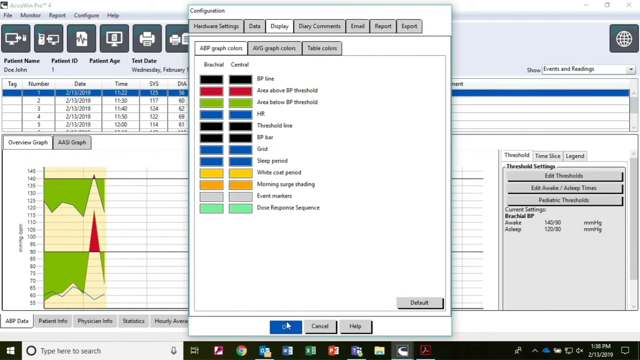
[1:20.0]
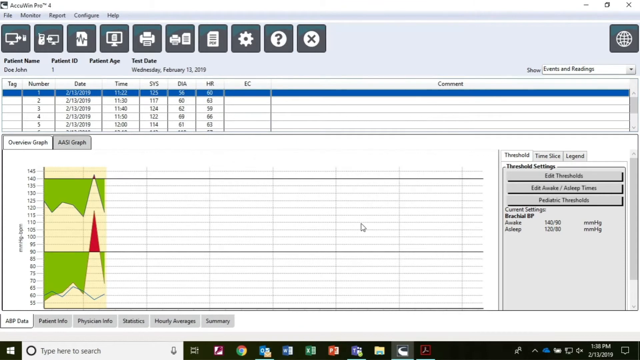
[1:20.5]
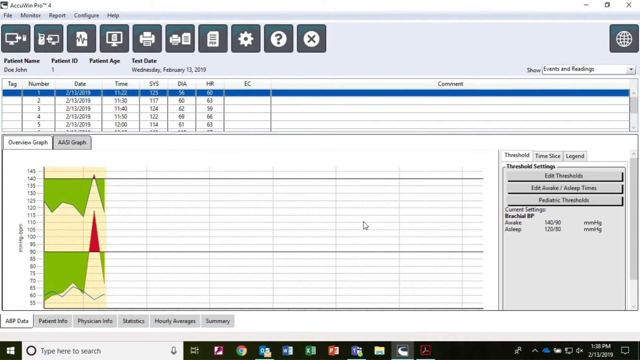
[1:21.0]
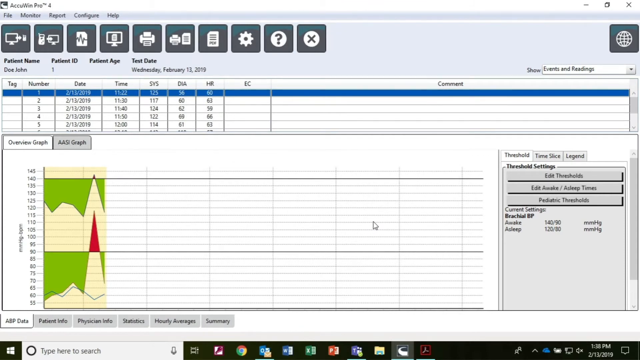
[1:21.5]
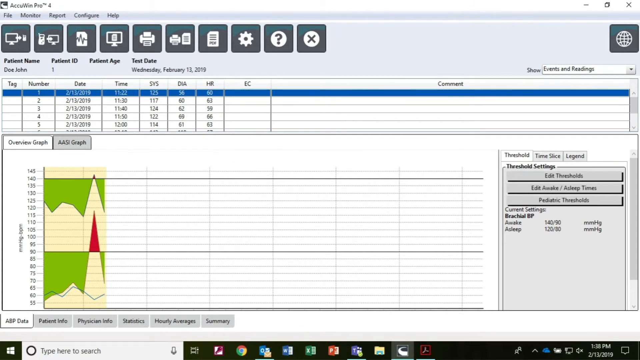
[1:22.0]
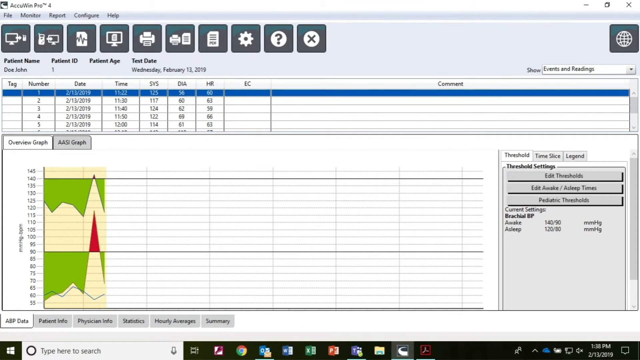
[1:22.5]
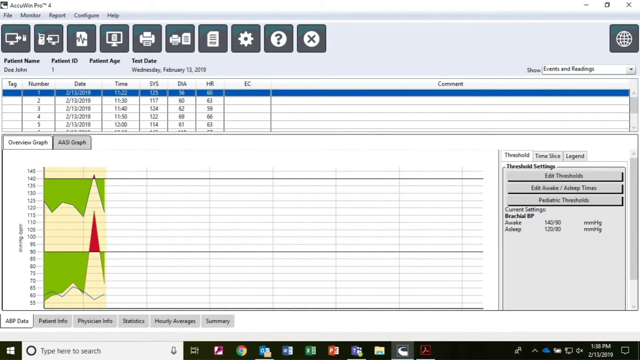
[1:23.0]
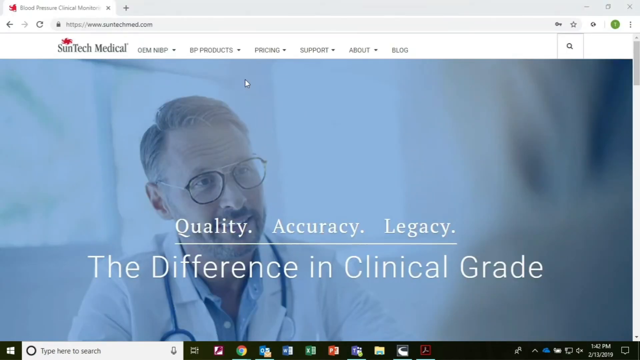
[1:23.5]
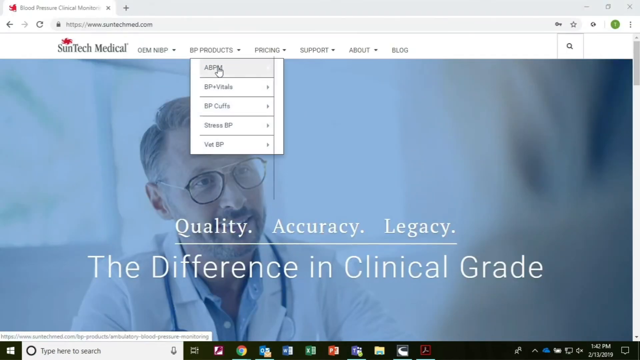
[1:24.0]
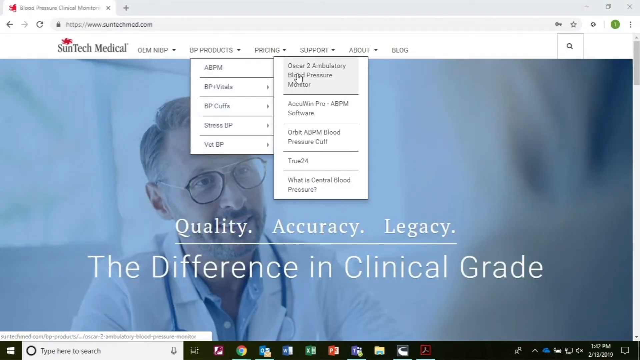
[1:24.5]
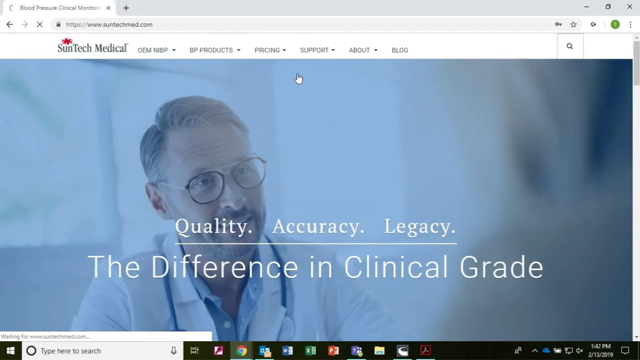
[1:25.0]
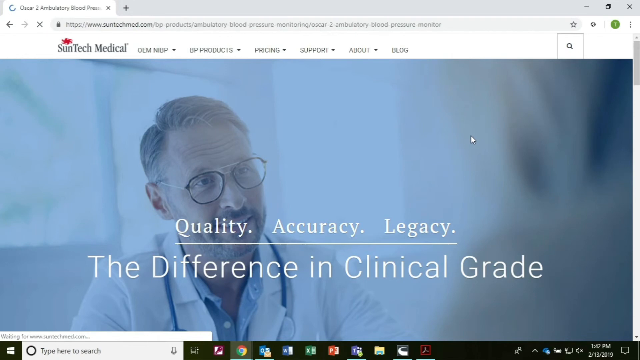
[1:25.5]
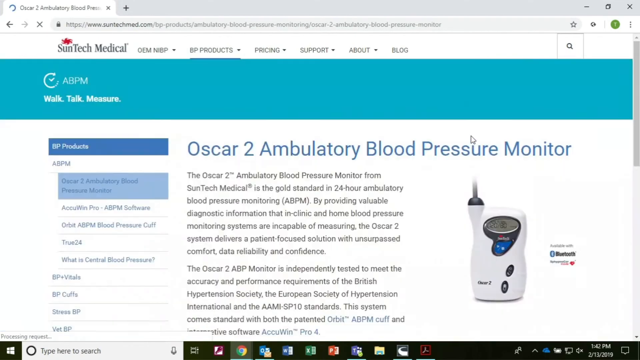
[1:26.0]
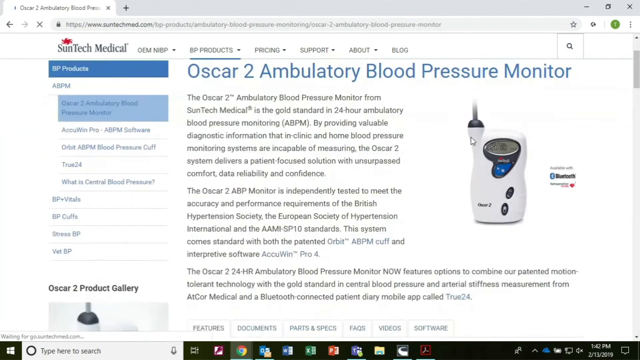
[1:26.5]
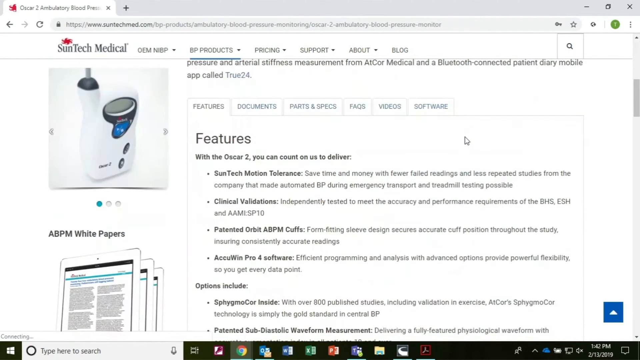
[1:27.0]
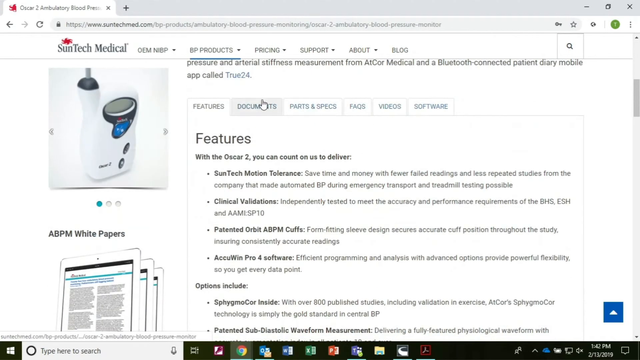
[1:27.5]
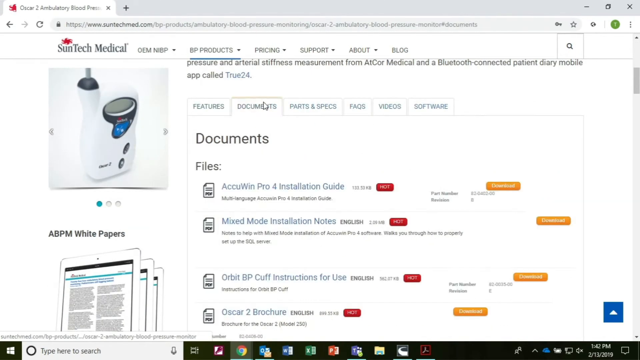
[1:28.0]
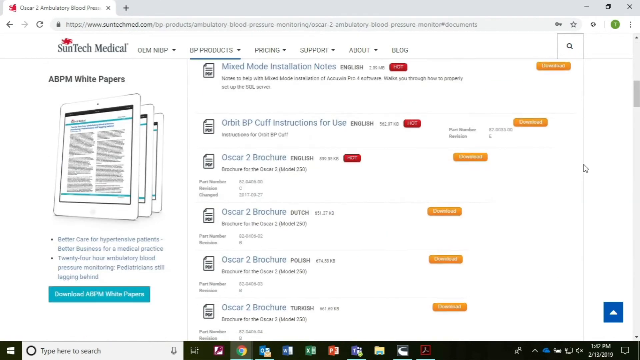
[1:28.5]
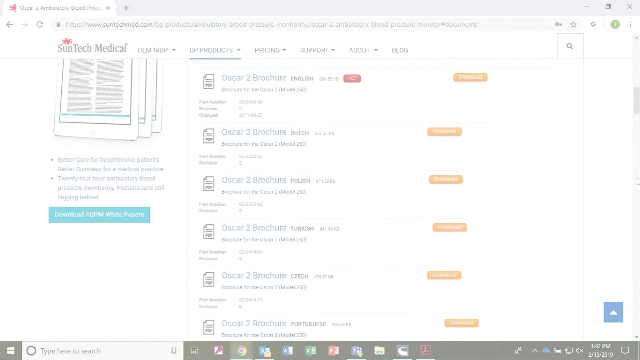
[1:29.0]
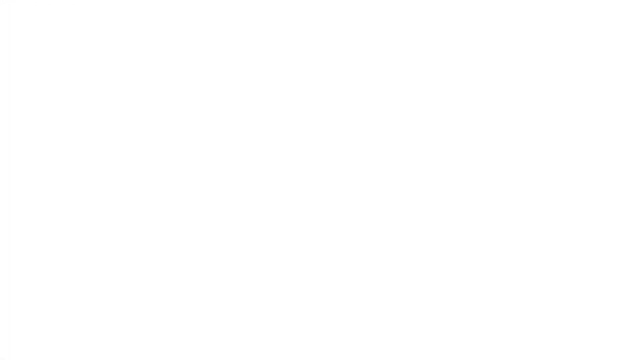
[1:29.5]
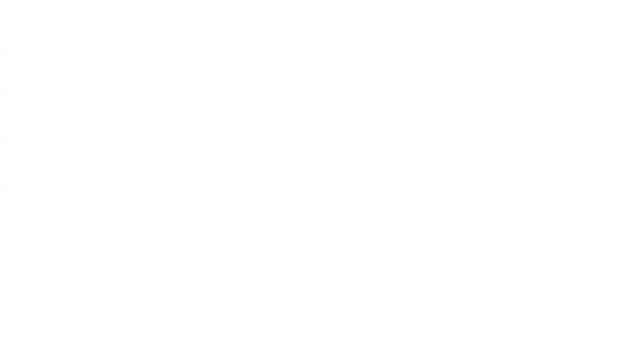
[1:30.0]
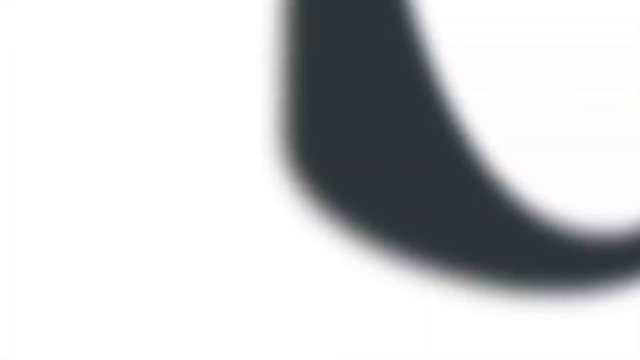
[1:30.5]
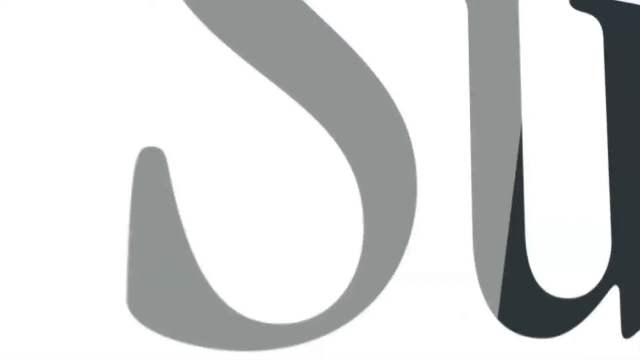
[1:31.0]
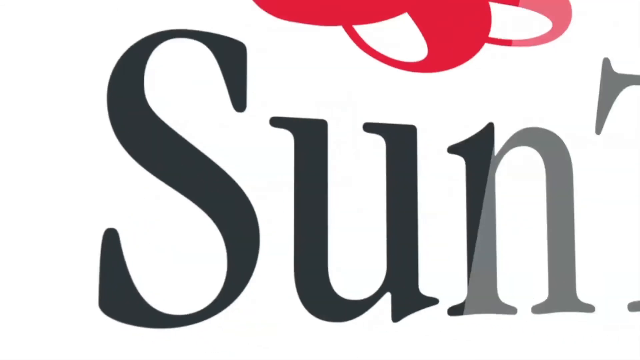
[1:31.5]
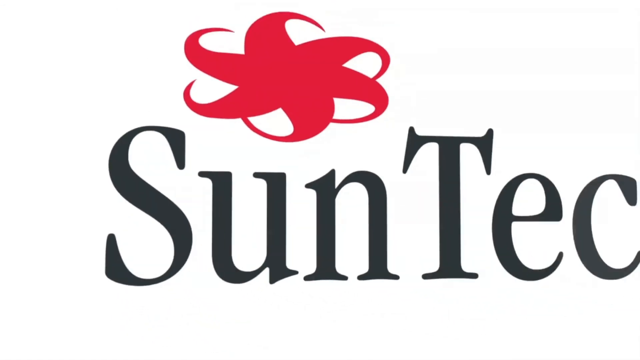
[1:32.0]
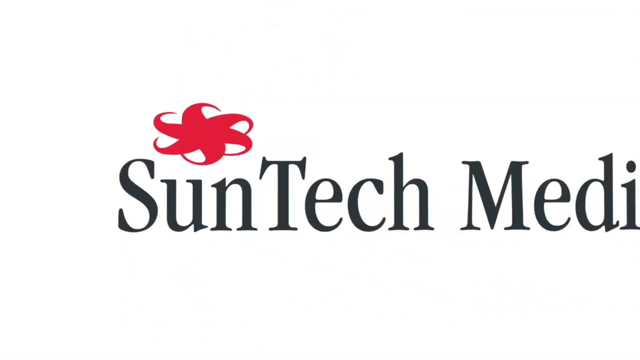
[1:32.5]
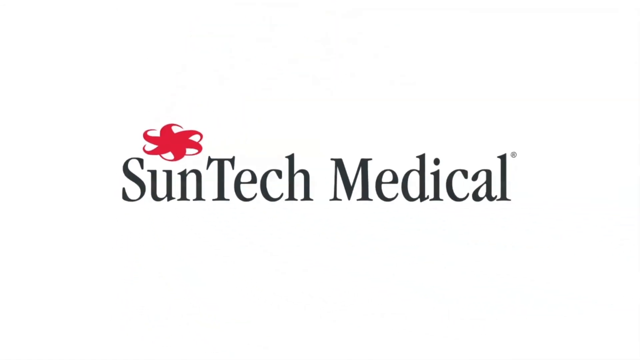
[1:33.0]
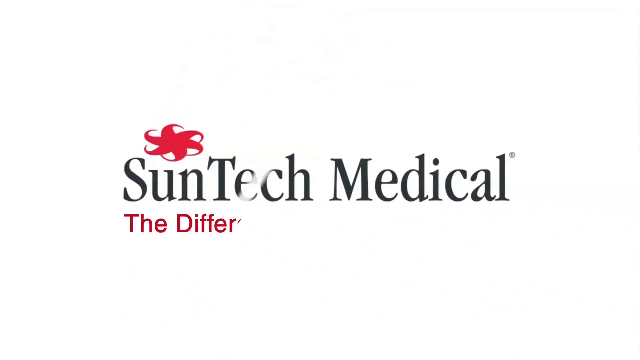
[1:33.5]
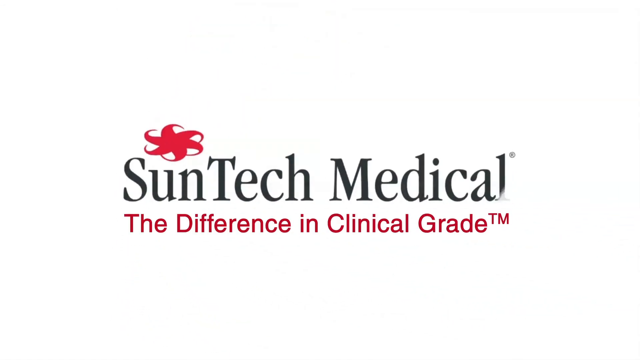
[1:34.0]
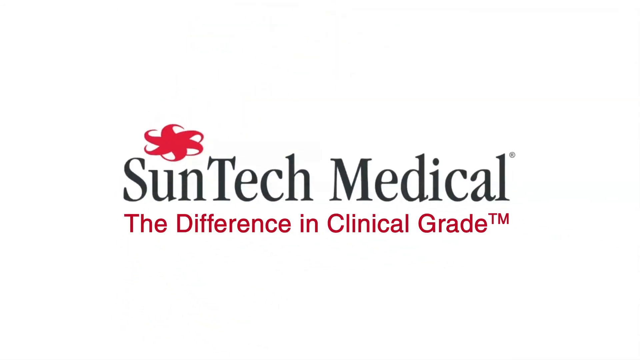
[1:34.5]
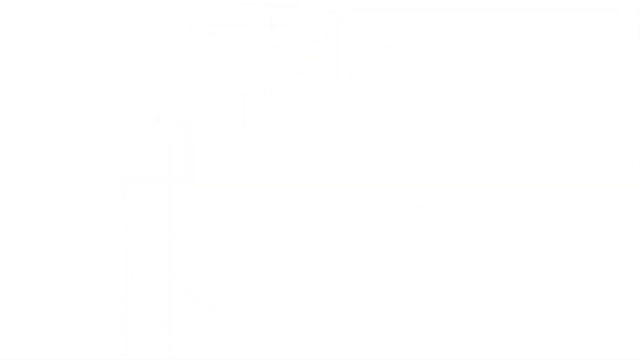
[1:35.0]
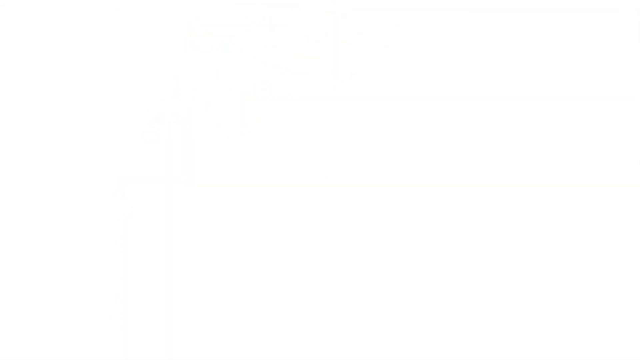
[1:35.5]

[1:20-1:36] The configurations display settings tab is open, but the user does not change any settings. The view then goes to the SunTech Medical website, where they click on a BD product drop-down leading to ABMP. Hovering over it shows options such as OSCR 2 ambulatory blood pressure monitor, OcuWare Pro ABMP software, Orbit A BMP blood pressure cups, and what is central blood pressure. They click on the OSCR 2 ambulatory blood pressure monitor, which opens a page showing that monitor, apparently the device the user plugged into the laptop at the beginning. They scroll down and look at the documentation.